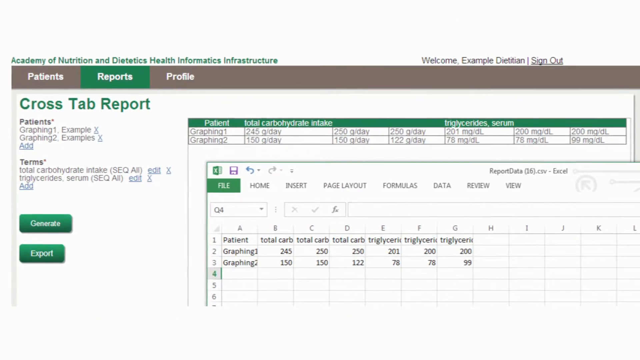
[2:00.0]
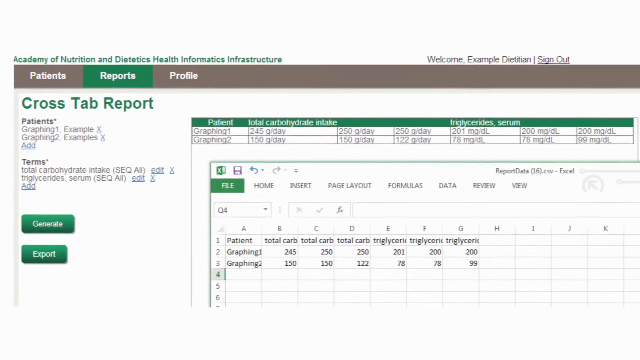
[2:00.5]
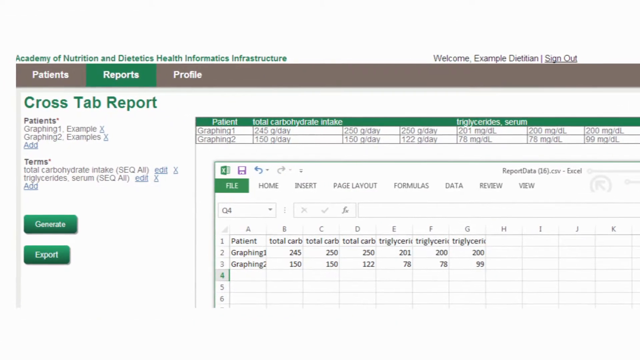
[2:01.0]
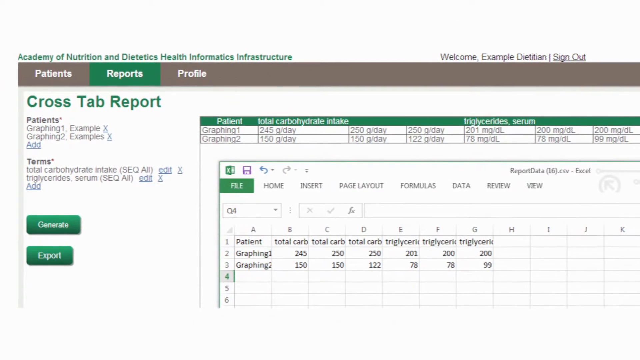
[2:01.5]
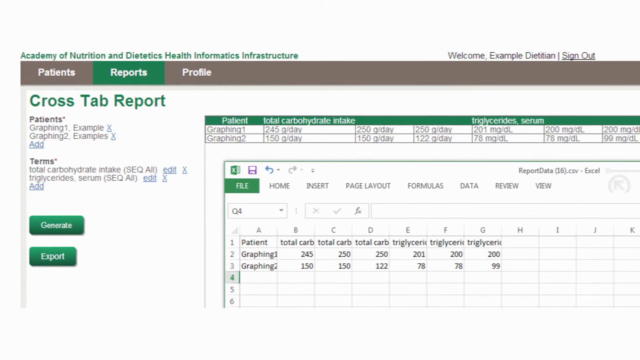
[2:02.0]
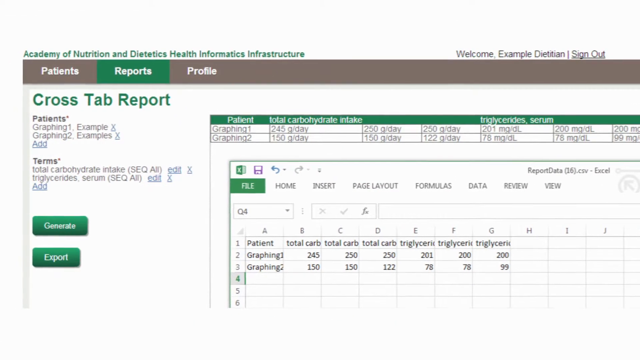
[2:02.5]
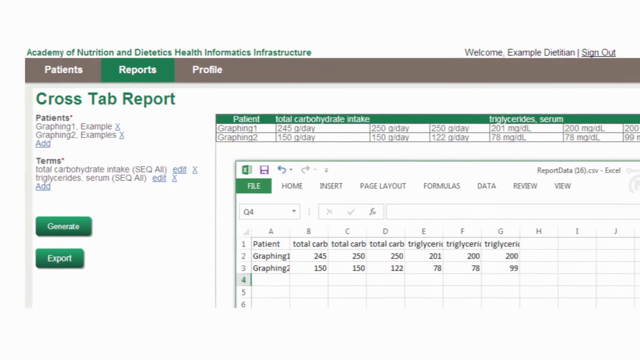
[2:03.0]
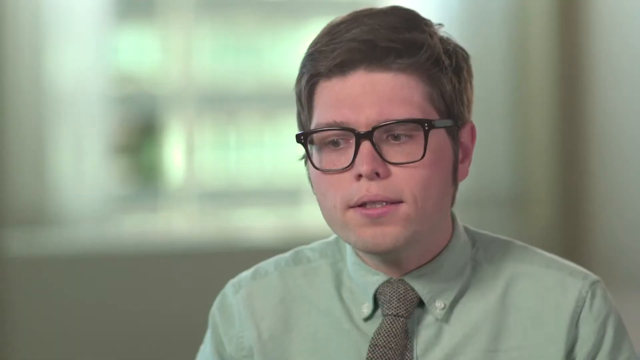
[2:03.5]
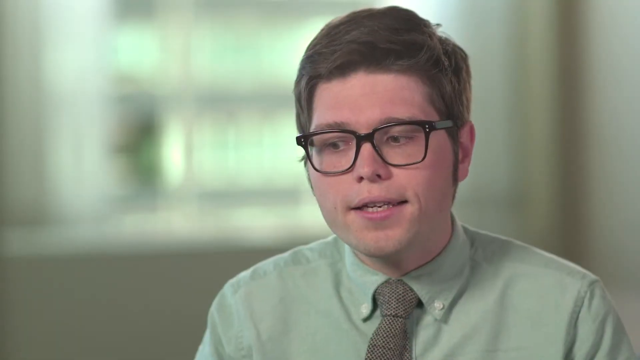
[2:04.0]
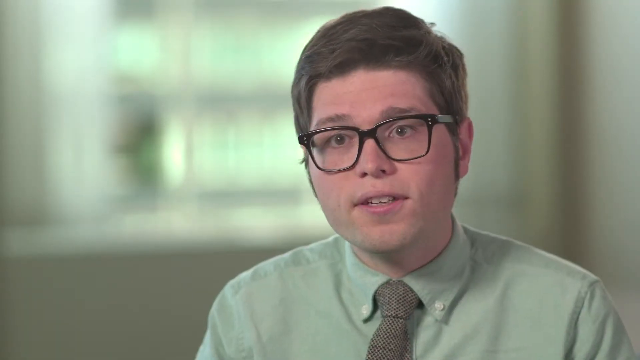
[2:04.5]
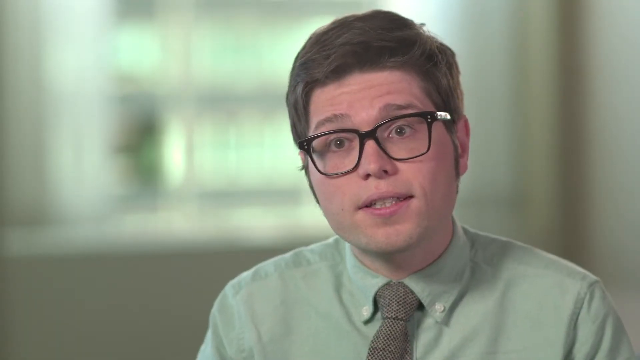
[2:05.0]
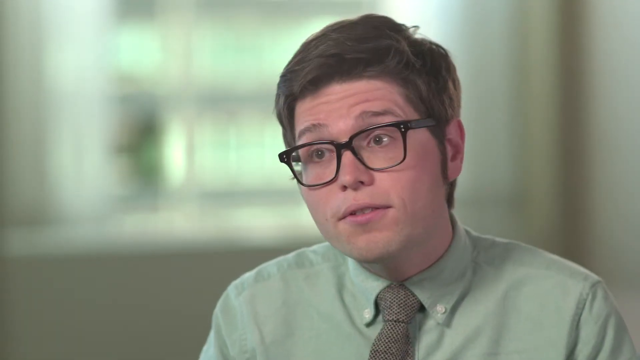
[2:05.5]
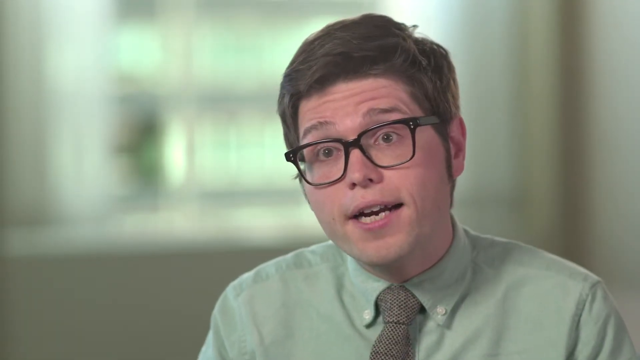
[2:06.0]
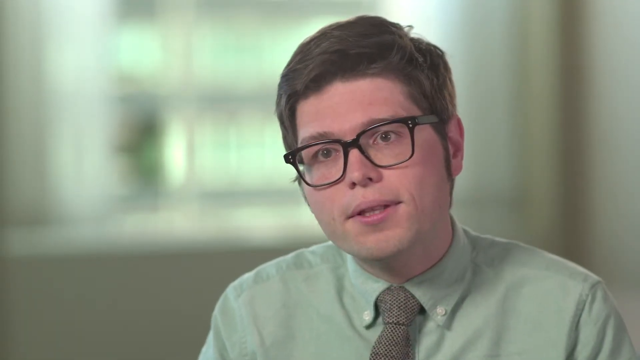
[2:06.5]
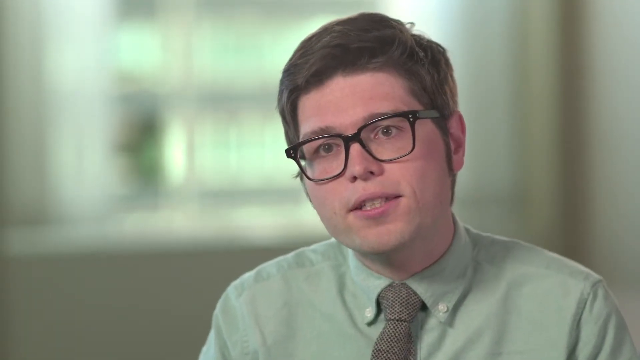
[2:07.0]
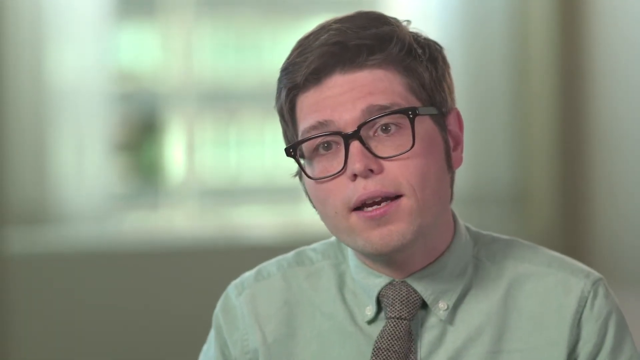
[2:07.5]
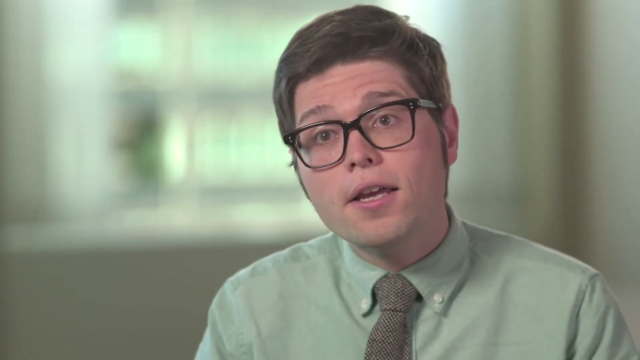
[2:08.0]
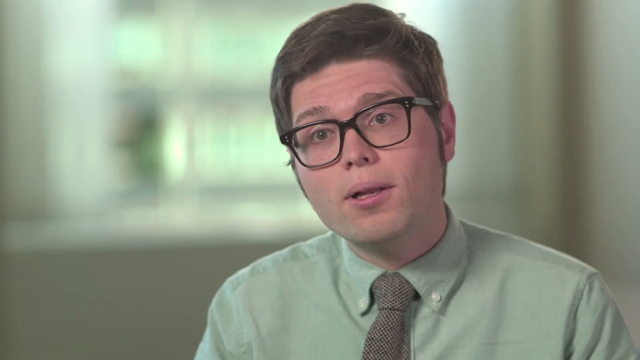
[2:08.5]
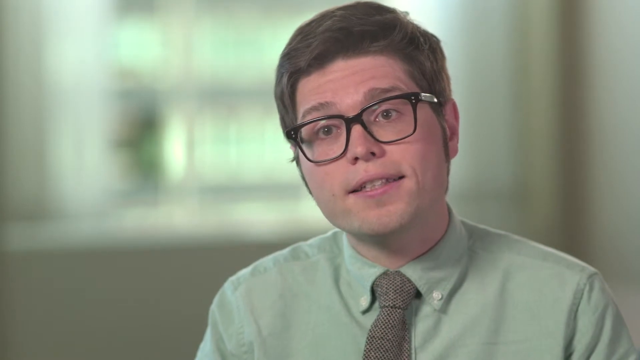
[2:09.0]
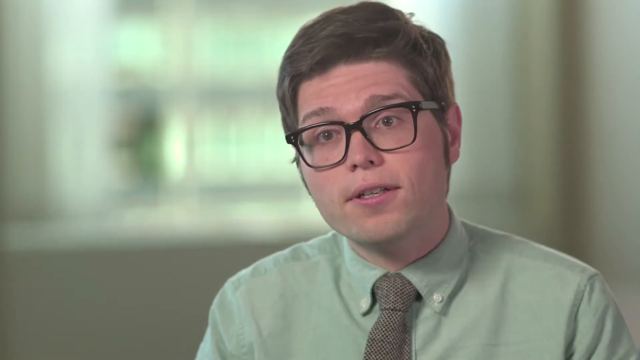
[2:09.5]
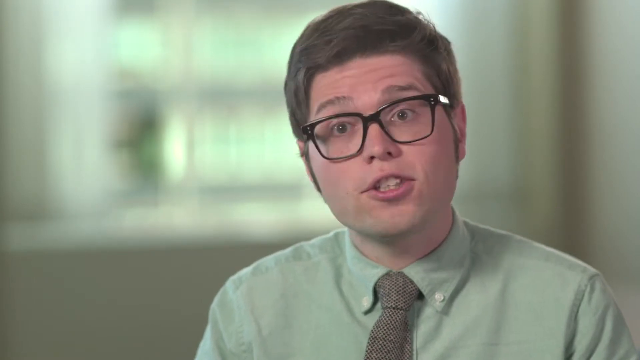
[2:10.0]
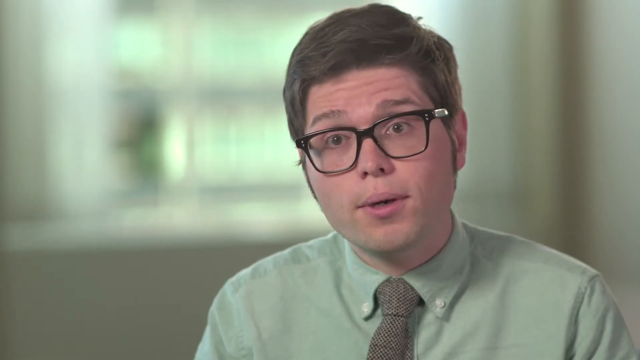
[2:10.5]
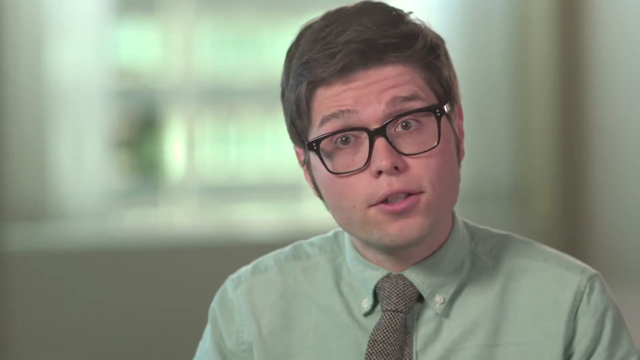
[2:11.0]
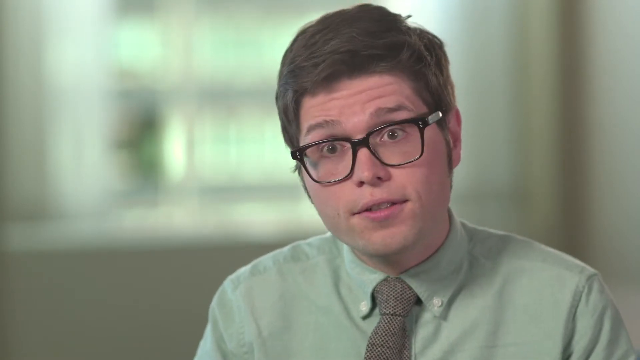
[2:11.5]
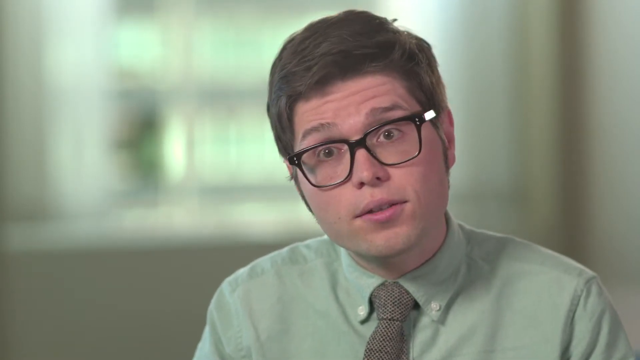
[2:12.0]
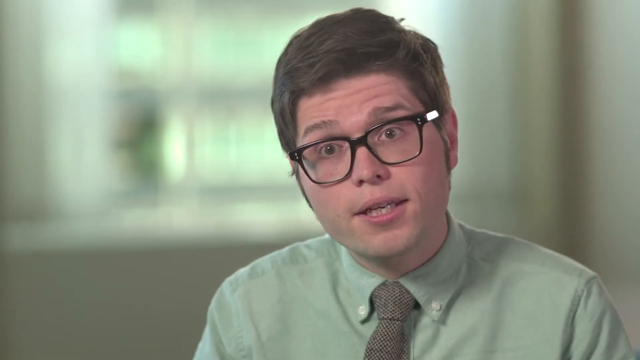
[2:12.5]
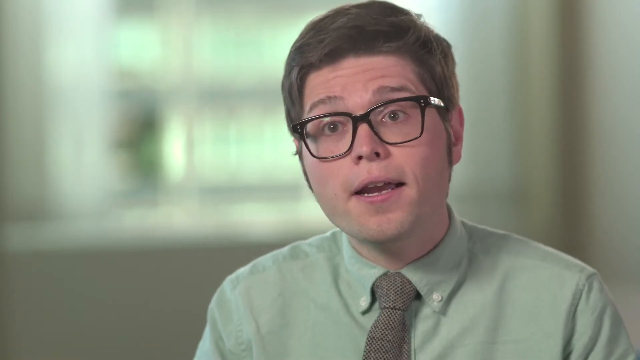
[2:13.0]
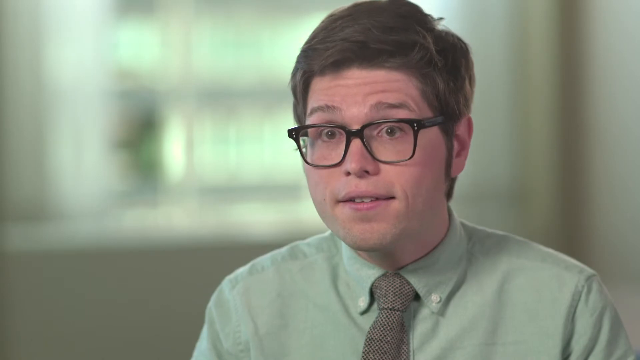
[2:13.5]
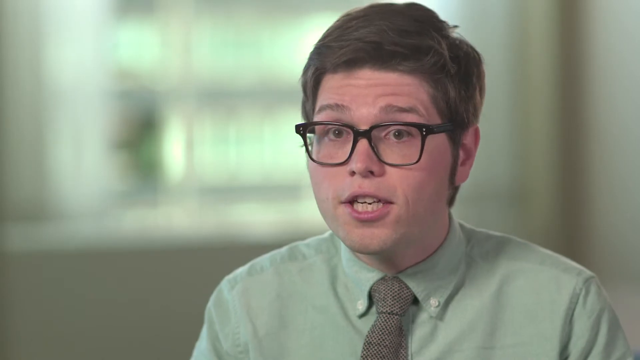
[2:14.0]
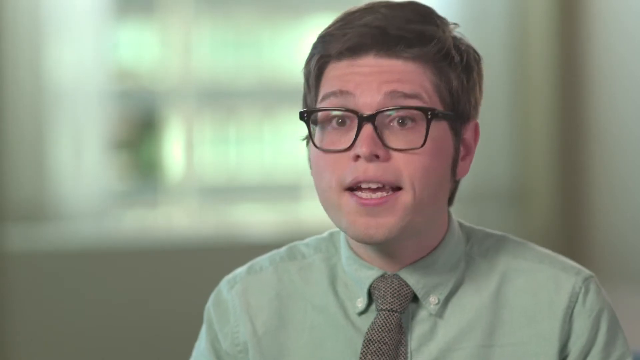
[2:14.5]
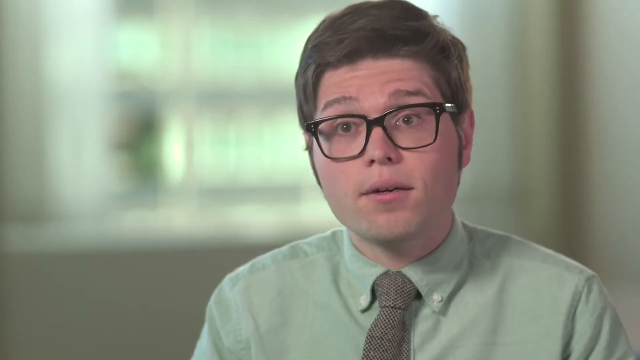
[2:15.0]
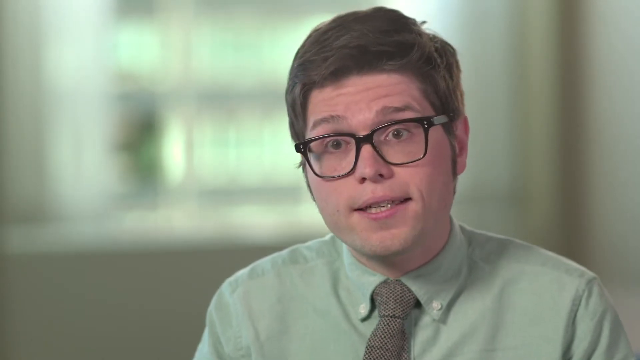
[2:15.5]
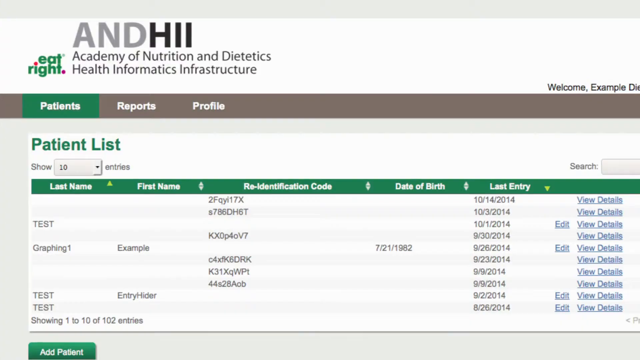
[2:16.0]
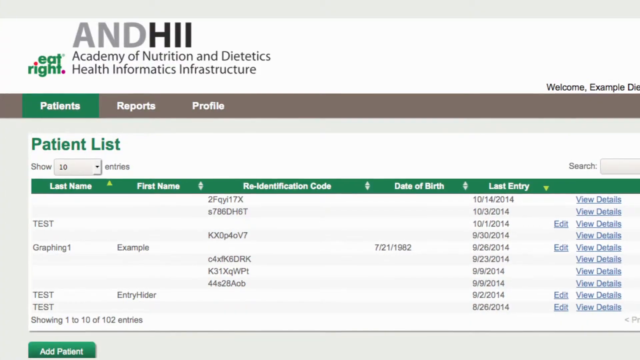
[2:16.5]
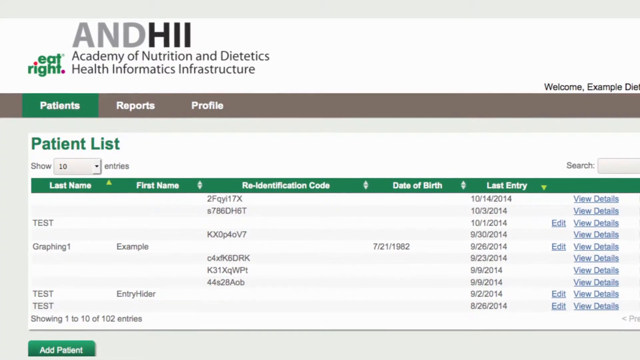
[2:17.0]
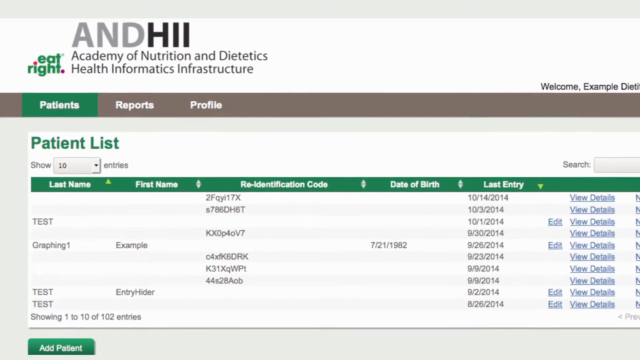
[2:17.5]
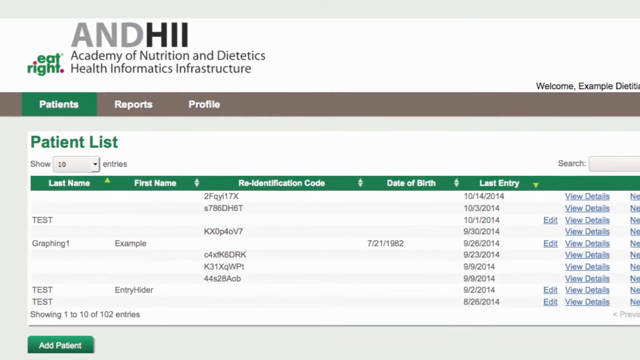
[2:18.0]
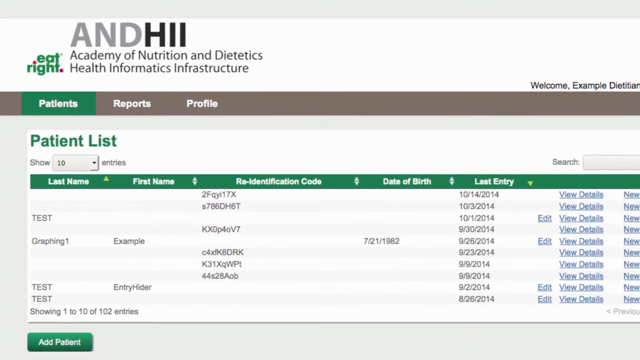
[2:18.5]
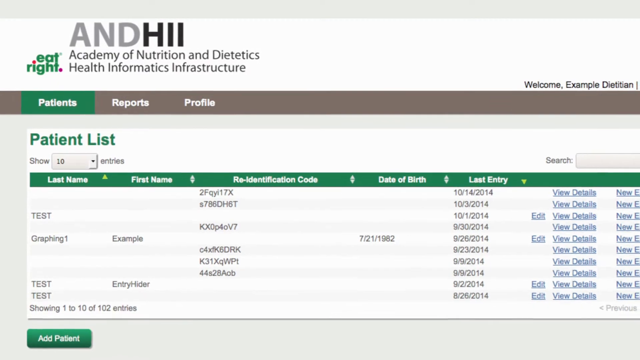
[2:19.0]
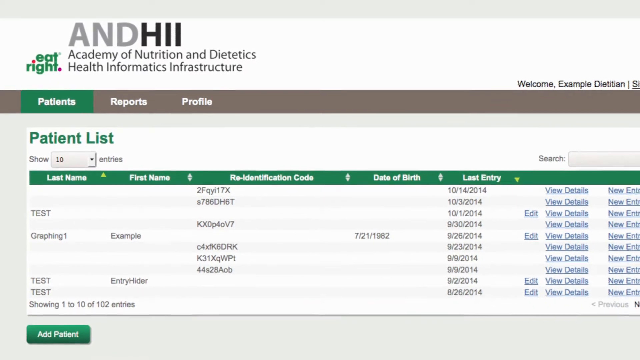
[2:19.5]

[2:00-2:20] The computer screen shows the crosstab report with a lot of information. The video returns to the young man in the office in front of the window, with short dark hair, long sideburns and black glasses; he speaks and looks very sincere and serious. Next, a form has the Academy of Nutrition and Dietetics Health Informatics Infrastructure logo at the top, followed by a patient list, and the view sort of pans out from there. The video goes back to the crosstab report, and this part kind of ends on the crosstab report.